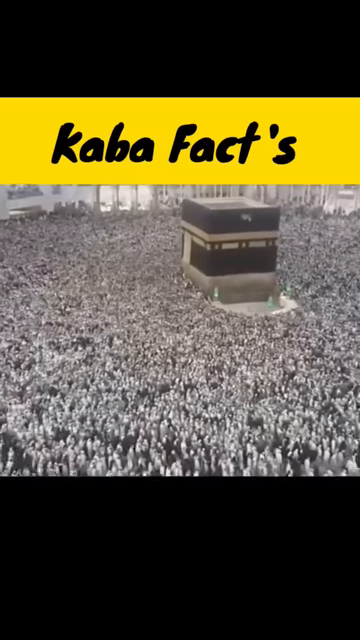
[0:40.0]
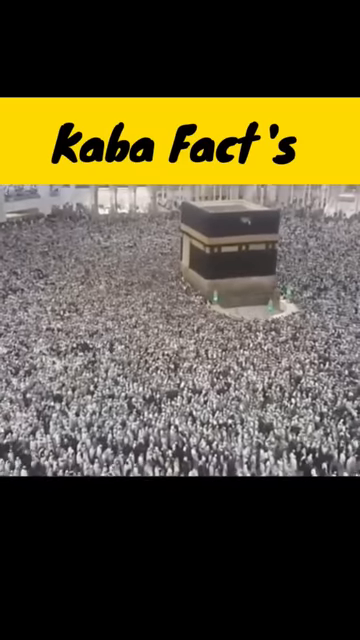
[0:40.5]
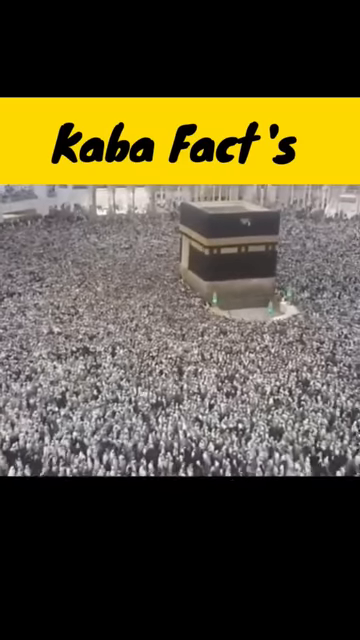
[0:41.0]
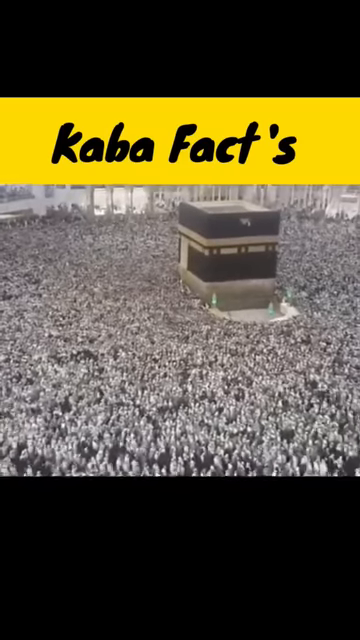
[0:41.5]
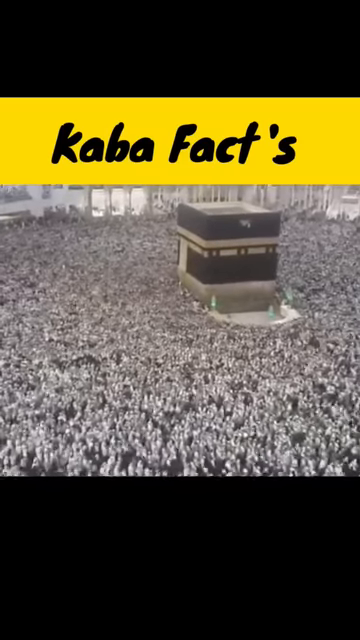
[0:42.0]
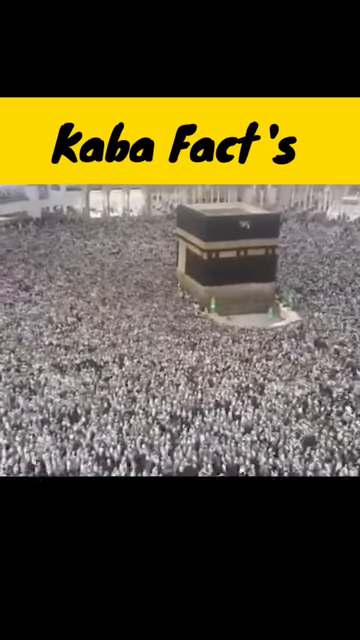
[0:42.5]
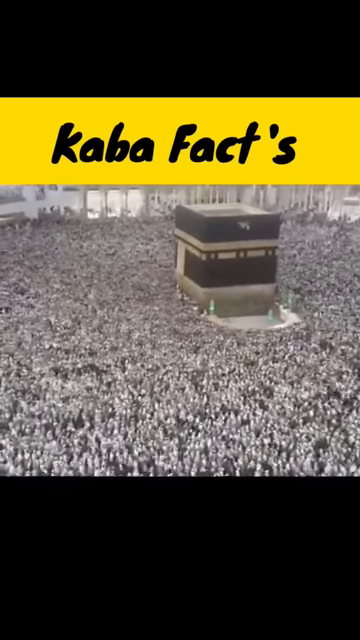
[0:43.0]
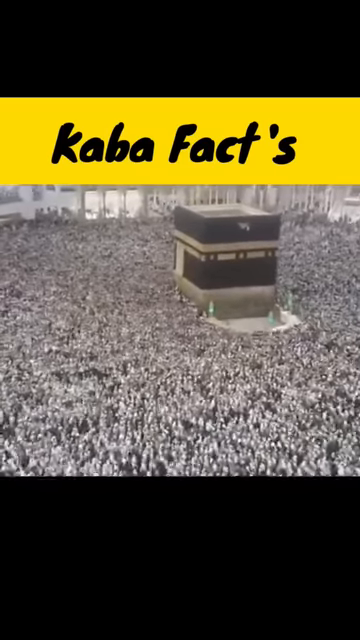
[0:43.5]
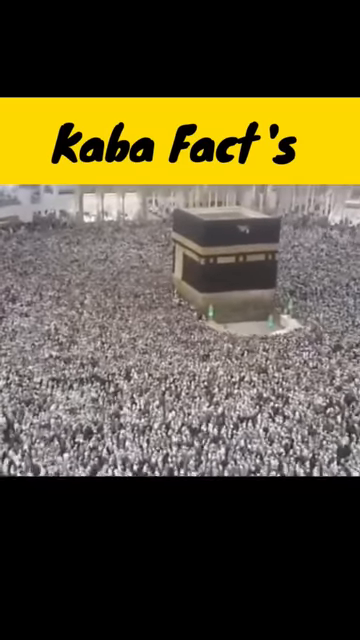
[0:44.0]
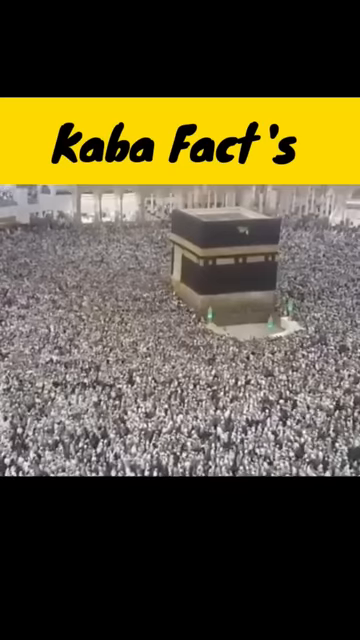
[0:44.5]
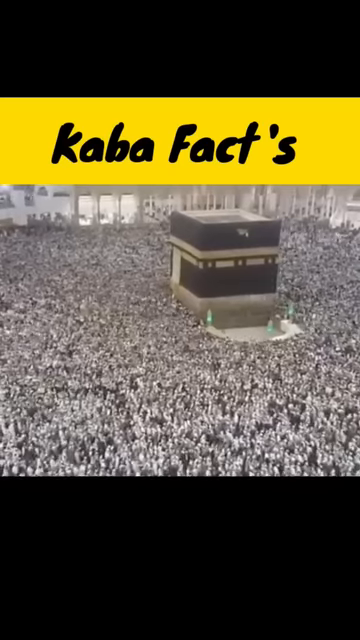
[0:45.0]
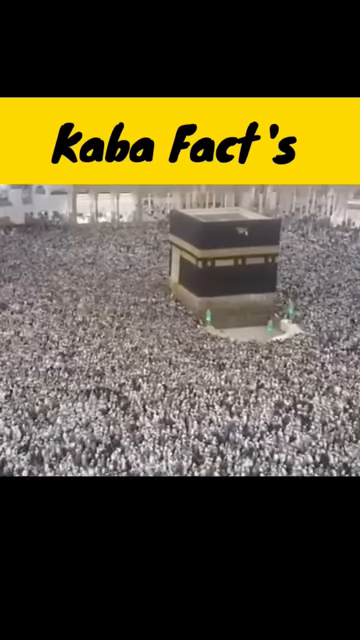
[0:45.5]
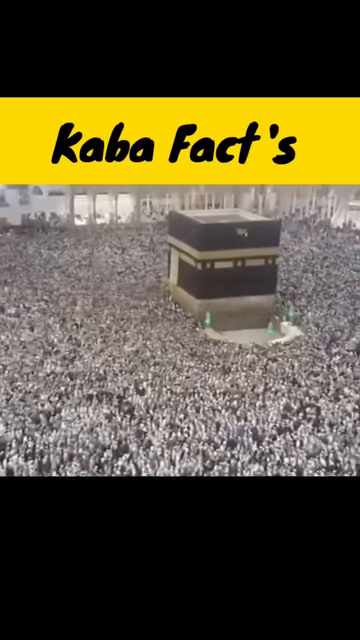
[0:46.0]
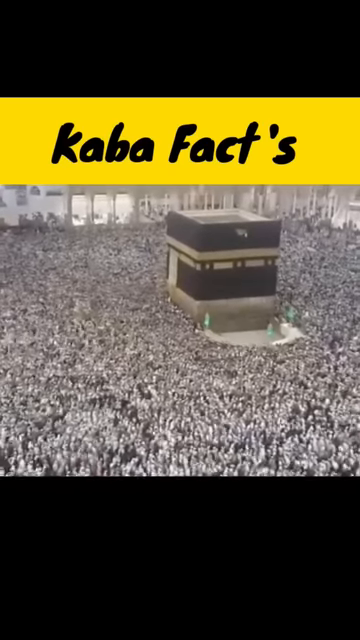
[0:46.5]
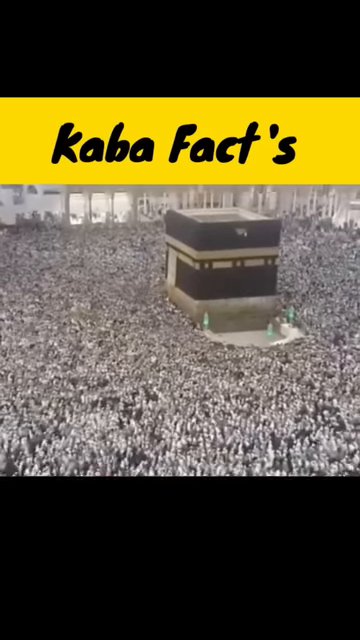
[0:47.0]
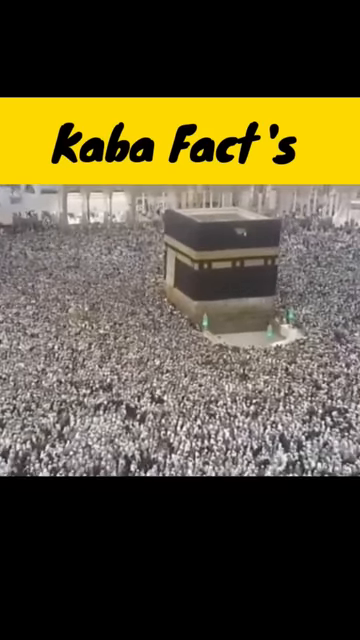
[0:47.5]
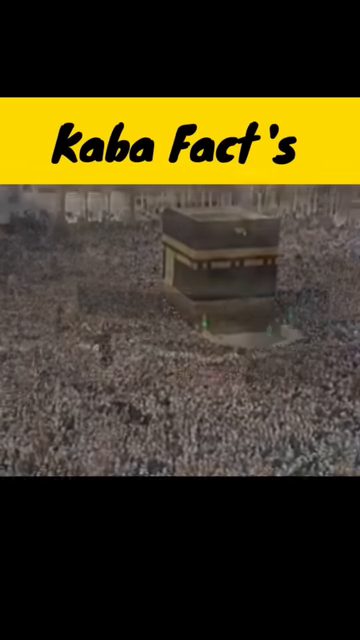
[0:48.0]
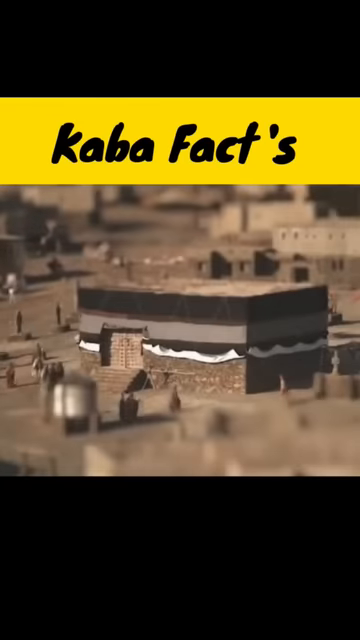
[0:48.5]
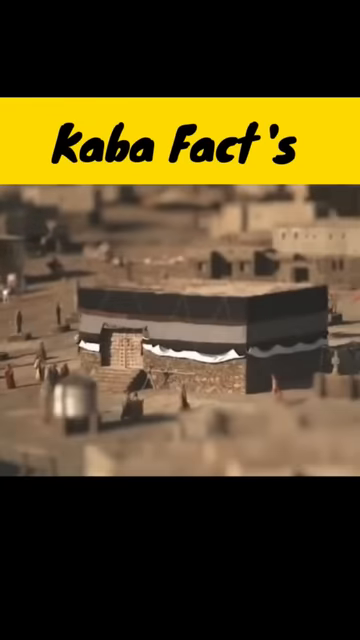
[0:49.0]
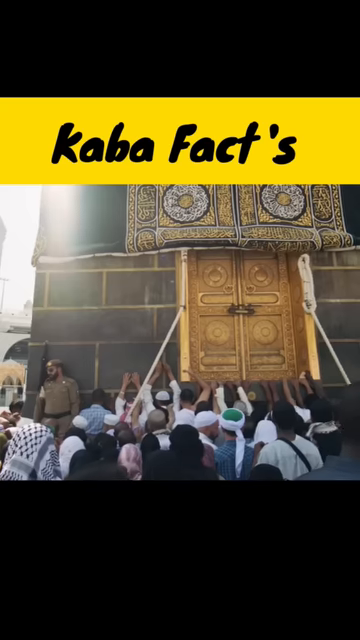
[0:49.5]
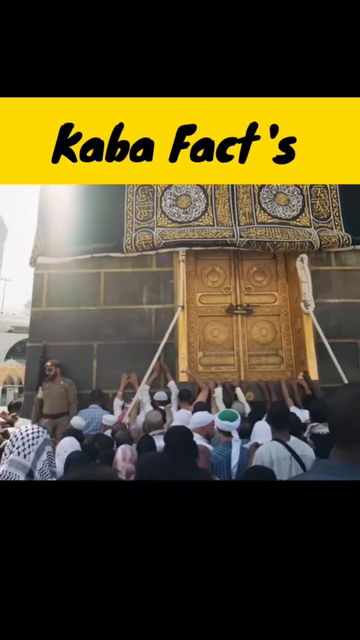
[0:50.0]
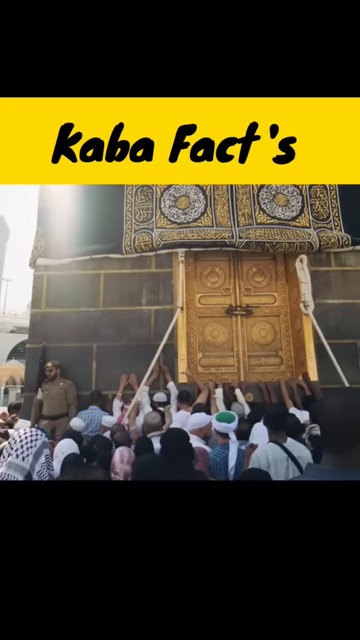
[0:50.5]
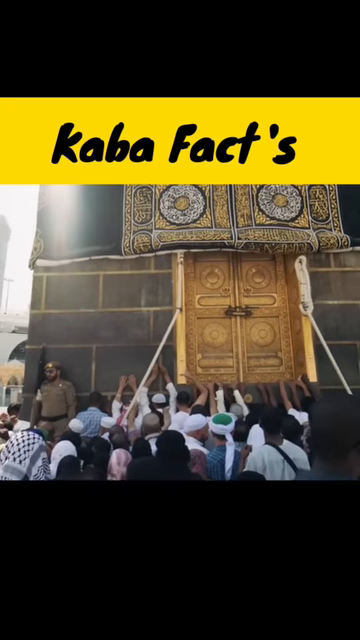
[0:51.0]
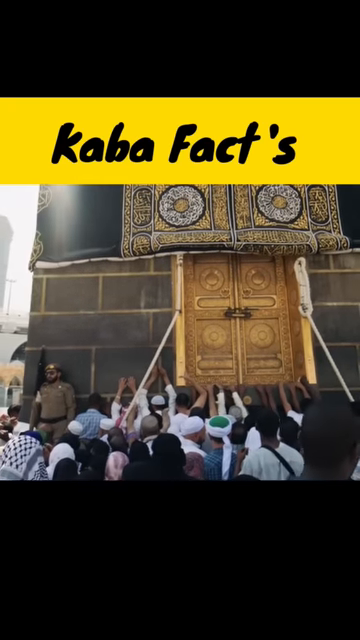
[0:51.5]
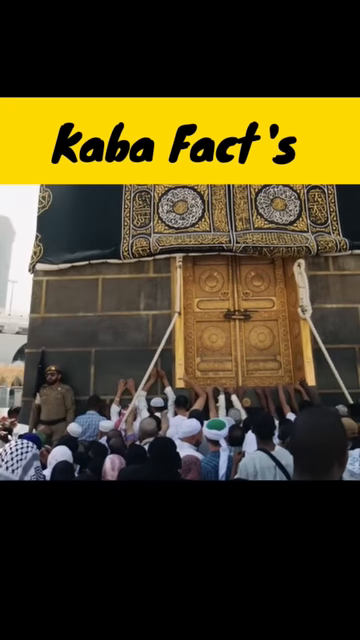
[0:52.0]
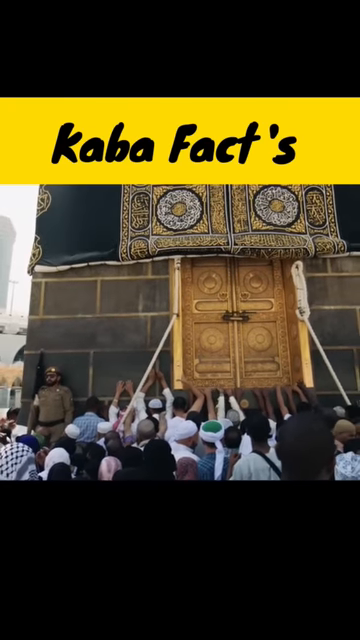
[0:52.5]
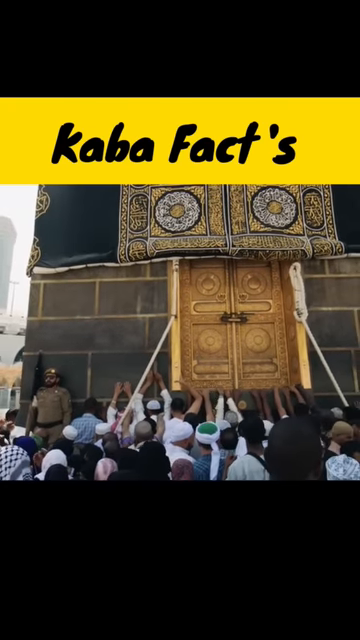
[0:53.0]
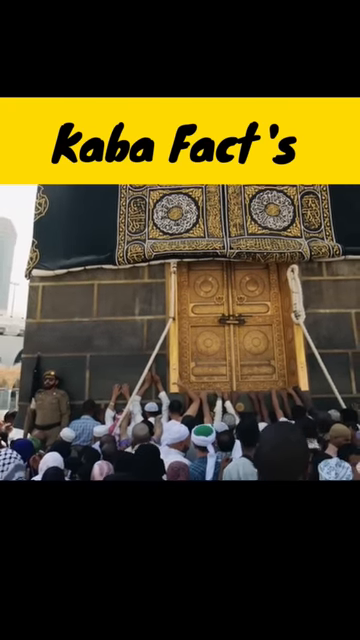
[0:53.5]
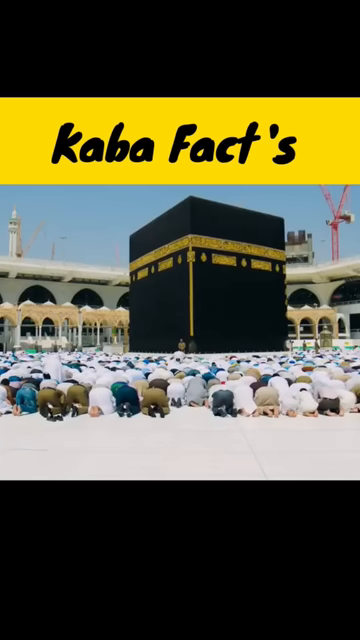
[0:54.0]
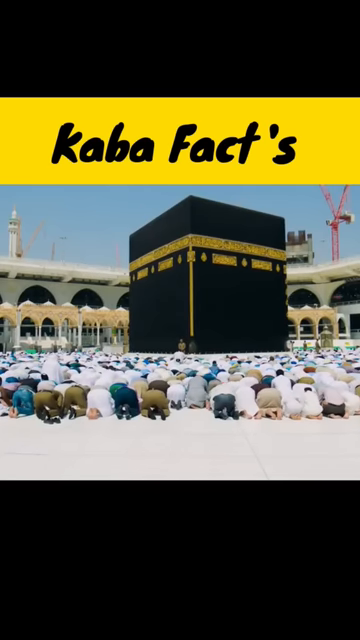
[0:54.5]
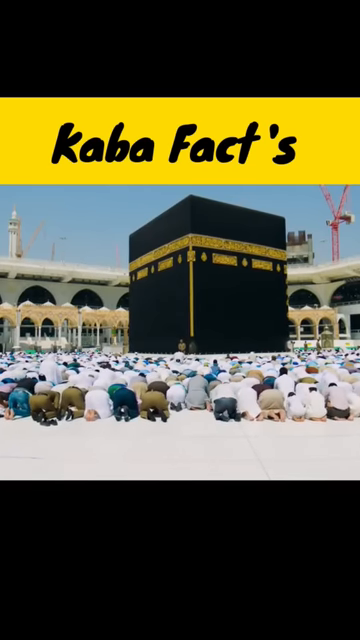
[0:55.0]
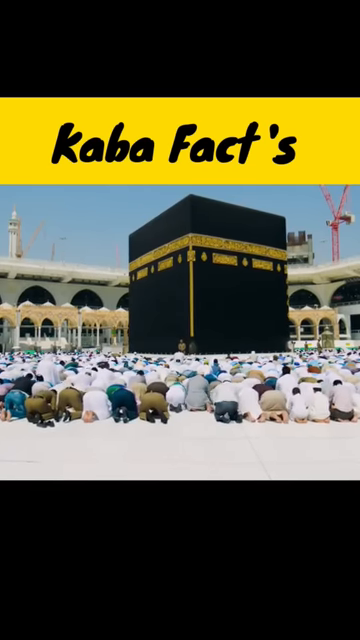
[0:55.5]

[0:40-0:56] A man walks around the building amid a sea of people, so many that no concrete can be seen. In the center, kind of upper right, is the black square with a little half bowl in front of it. It has gold trim about one-third of the way down that kind of sticks out like an awning, with more gold trim underneath that. In the far distance where the people are walking, the outline of the building is faintly visible. Then there is a faraway shot of the square building, with kind of concrete all around it, as if it has been moved. The yellow banner with black text still says "Caba facts". The front door is gold, with gold adorned above it. Next is a drawing of the black building with people seen from behind, all leaning and kneeling down as if in prayer. At the bottom of the image there is a little bit of something like sand, and from there a sea of people extends all the way up; in the far background is another big gray building. Where the people are shown around the building, they are going counterclockwise around it. Where the door is shown, probably 20 or 30 people are in front of it, all reaching up and putting their hands on the front of the door as if in prayer to the object.